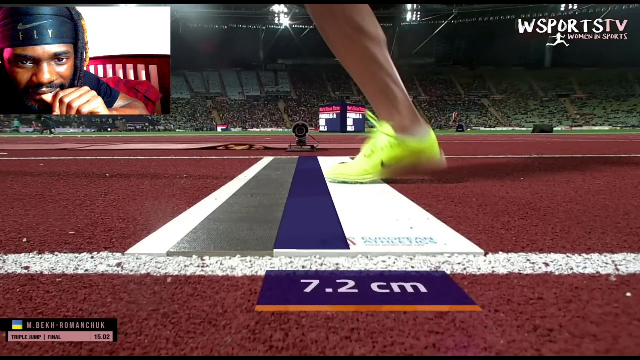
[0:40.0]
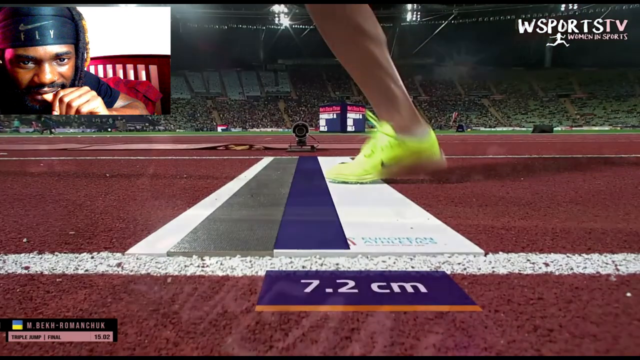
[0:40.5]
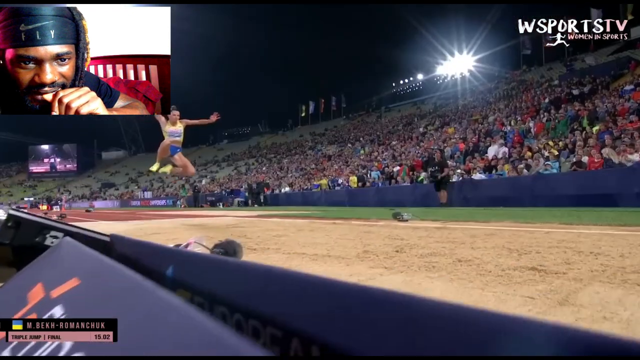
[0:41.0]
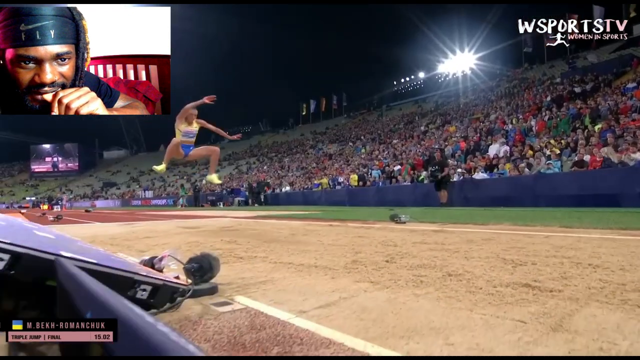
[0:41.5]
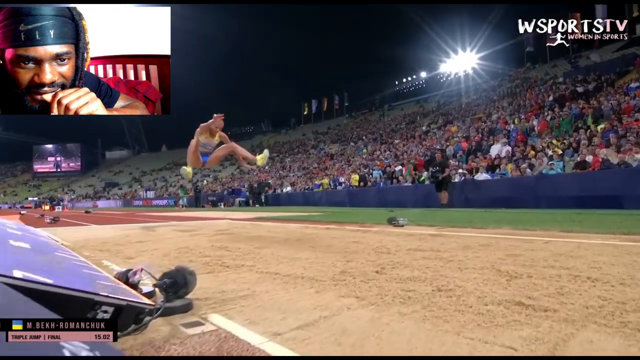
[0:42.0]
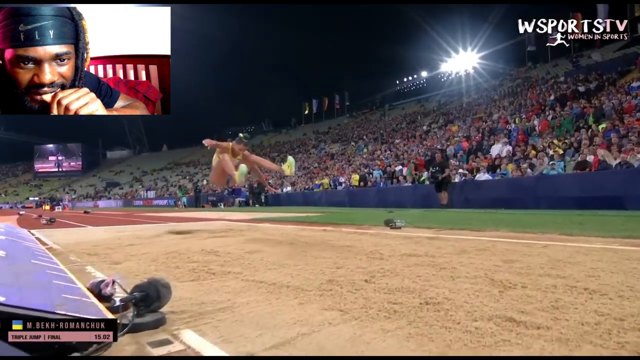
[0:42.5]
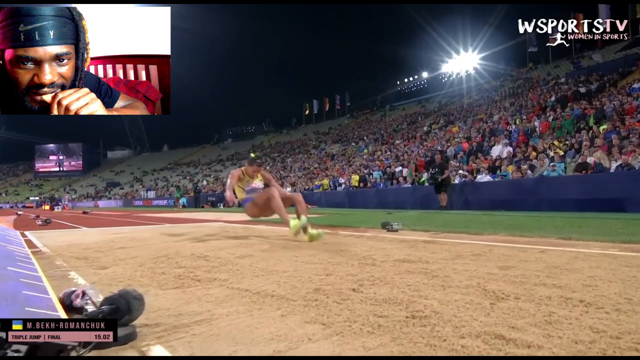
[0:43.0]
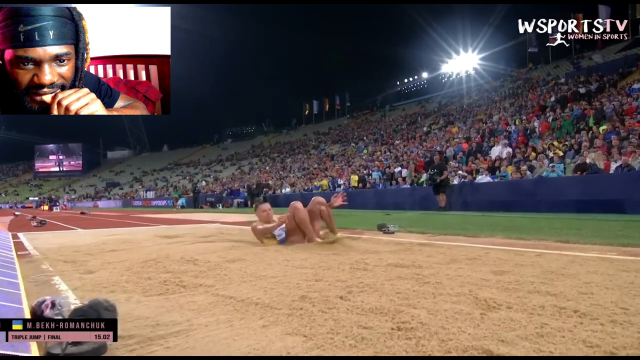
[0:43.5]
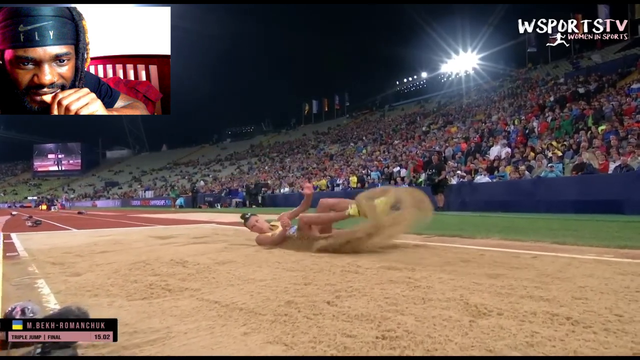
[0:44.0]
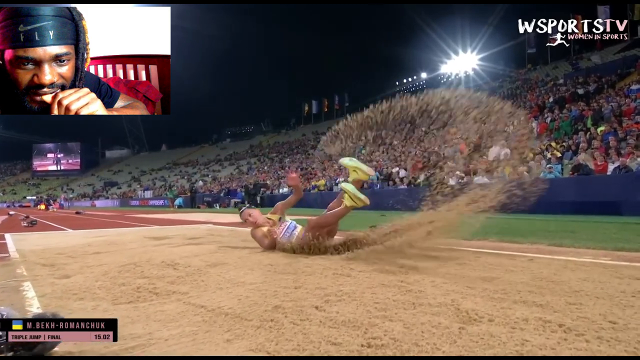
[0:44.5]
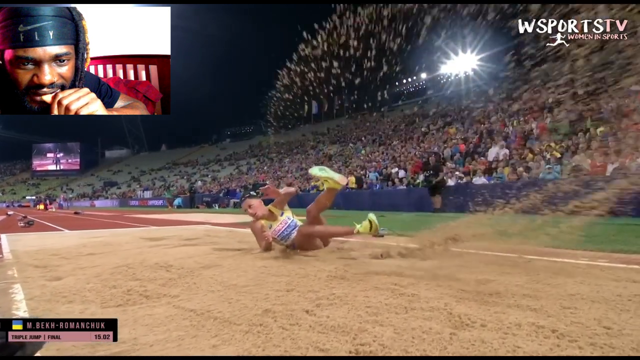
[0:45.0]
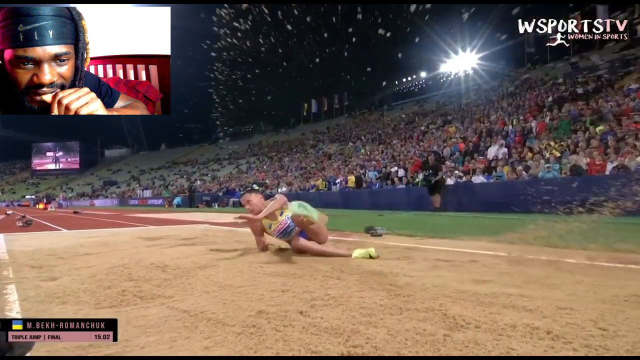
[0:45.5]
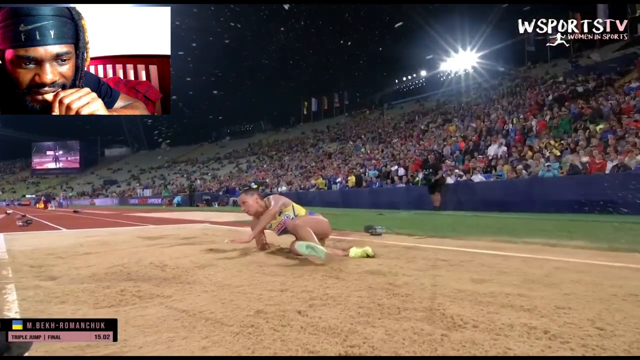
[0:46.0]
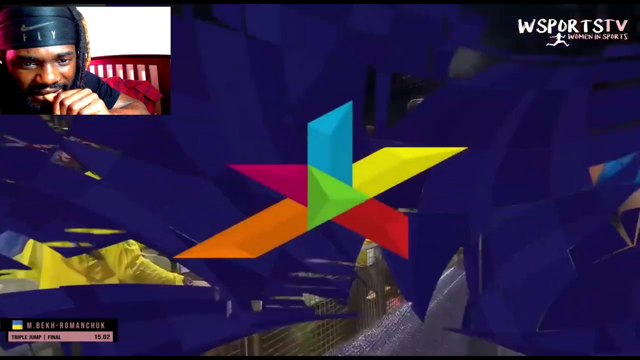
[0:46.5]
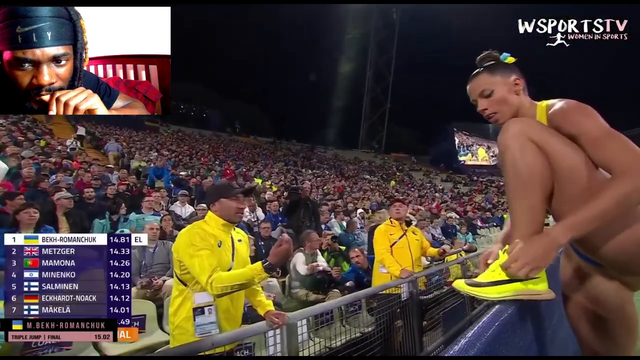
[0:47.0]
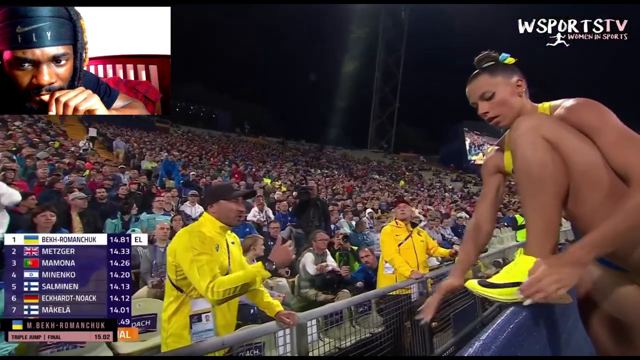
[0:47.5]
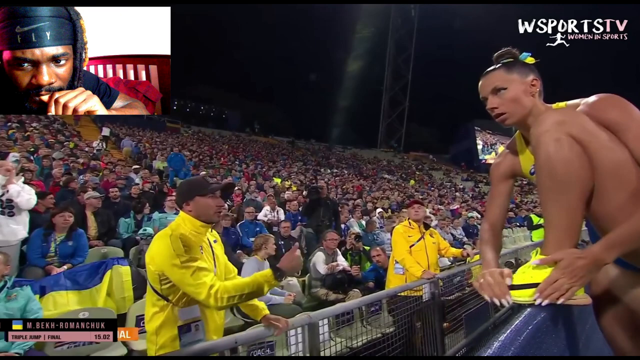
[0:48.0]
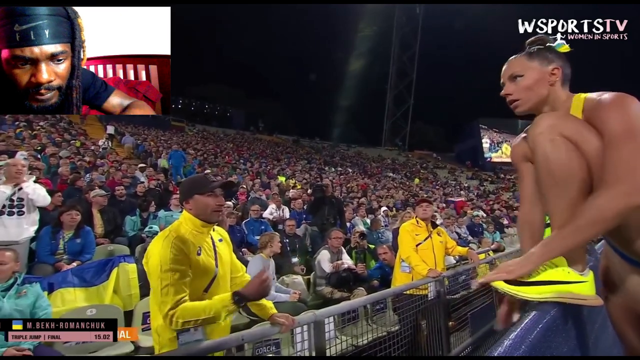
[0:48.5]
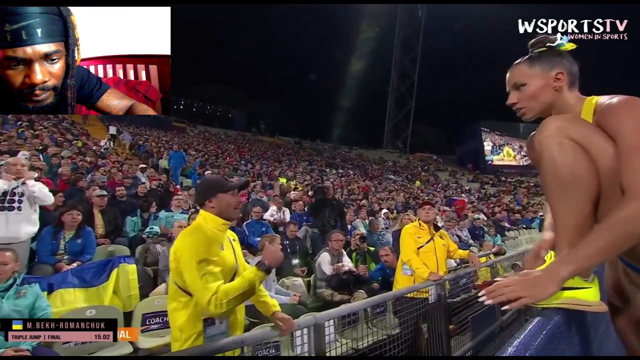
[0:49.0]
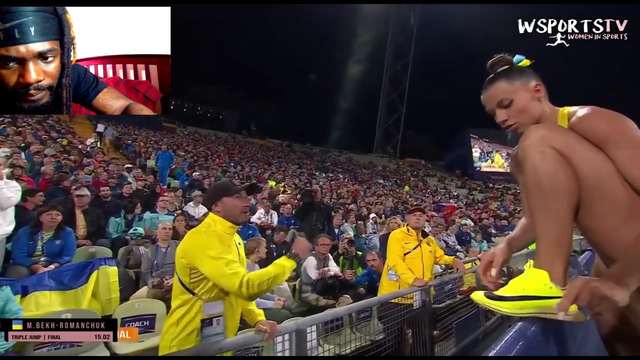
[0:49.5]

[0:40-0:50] The same jump is replayed in slow motion from a slightly different angle, and the sand flows outward under her feet. Afterward, she goes to a man on the left in a big yellow sweater jacket who appears to be her coach. He talks to her while she ties her shoes, making them tight.